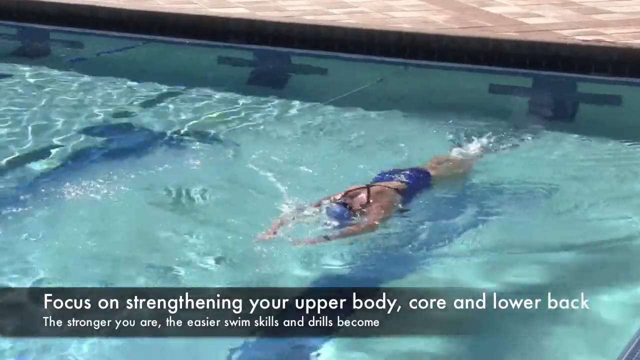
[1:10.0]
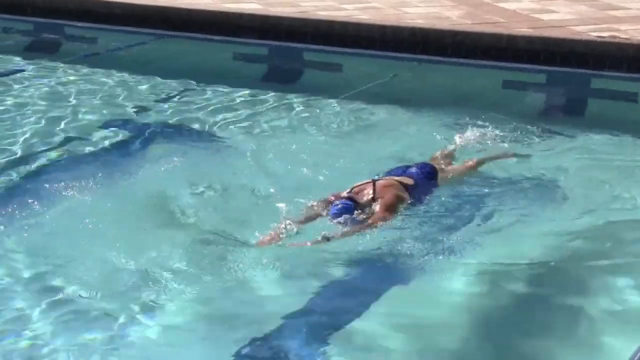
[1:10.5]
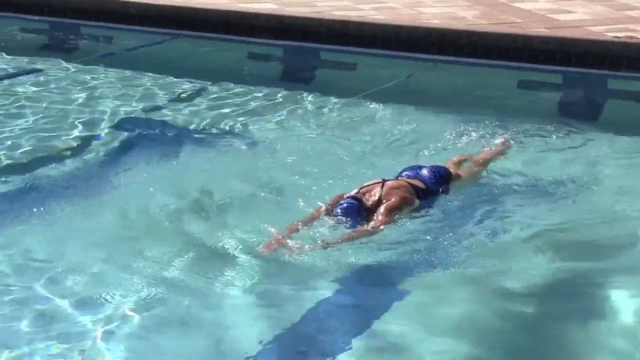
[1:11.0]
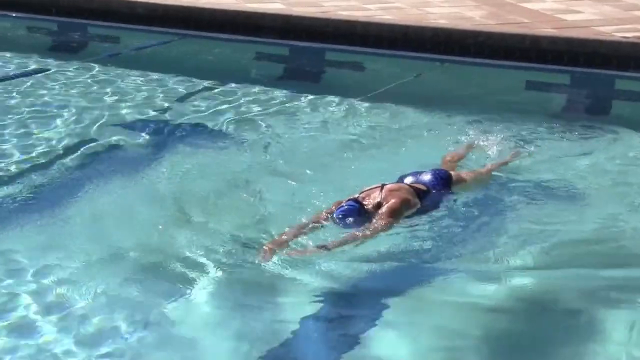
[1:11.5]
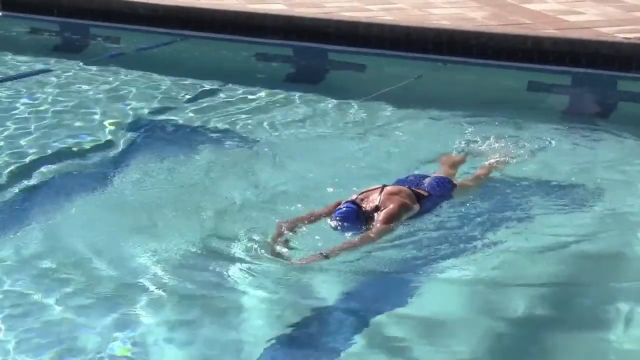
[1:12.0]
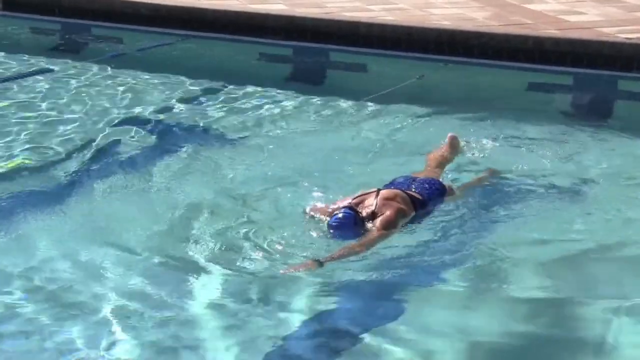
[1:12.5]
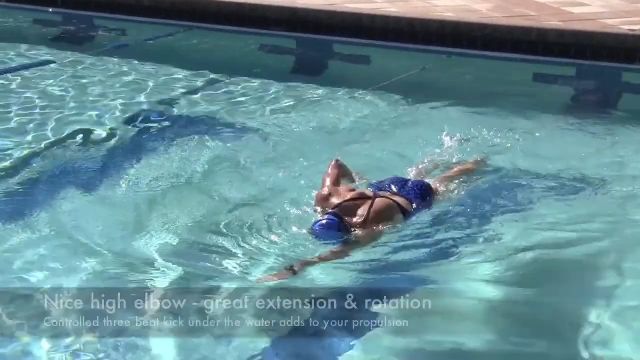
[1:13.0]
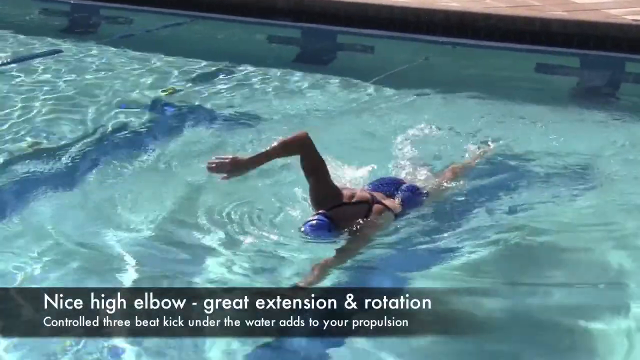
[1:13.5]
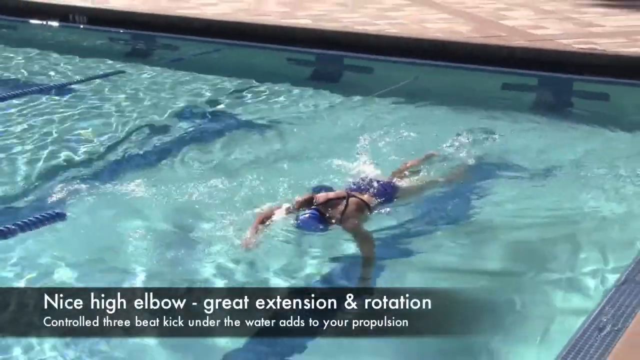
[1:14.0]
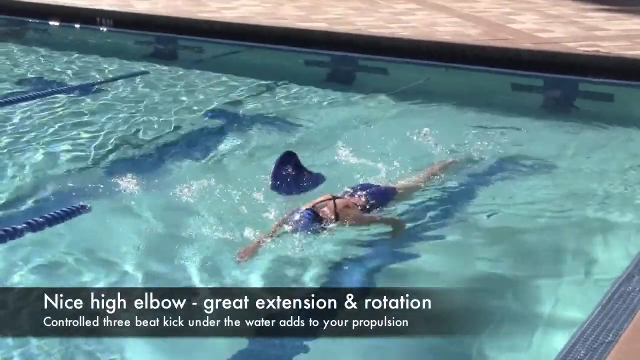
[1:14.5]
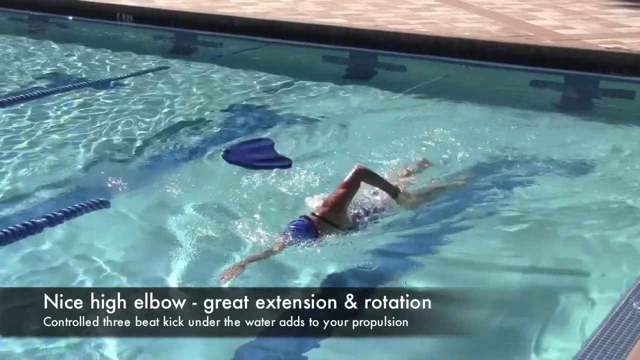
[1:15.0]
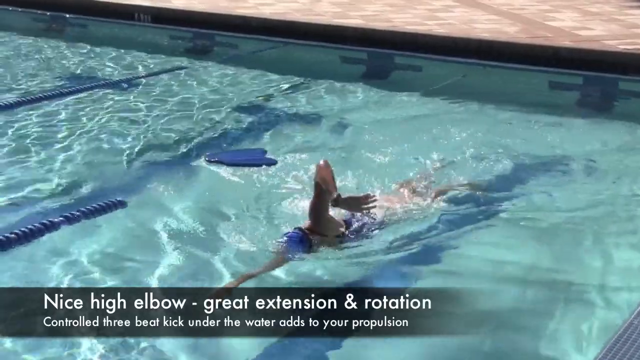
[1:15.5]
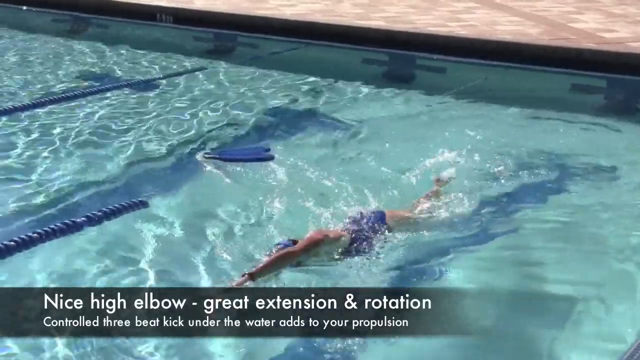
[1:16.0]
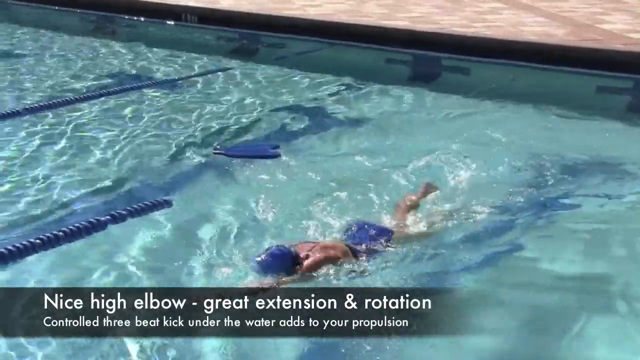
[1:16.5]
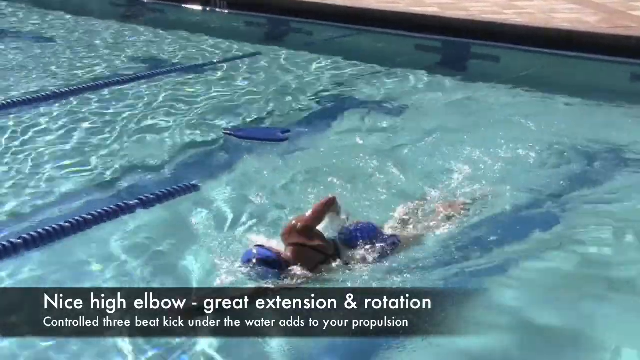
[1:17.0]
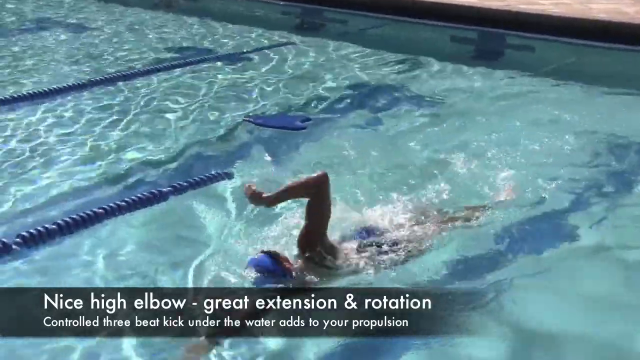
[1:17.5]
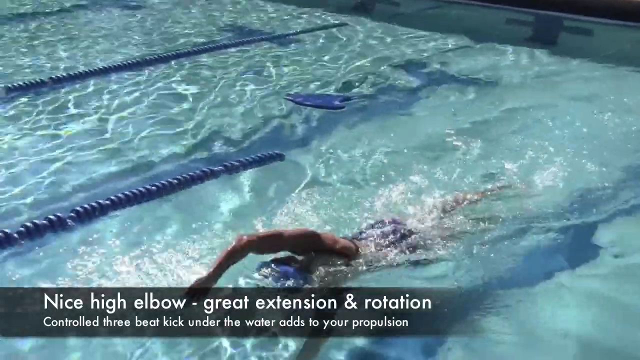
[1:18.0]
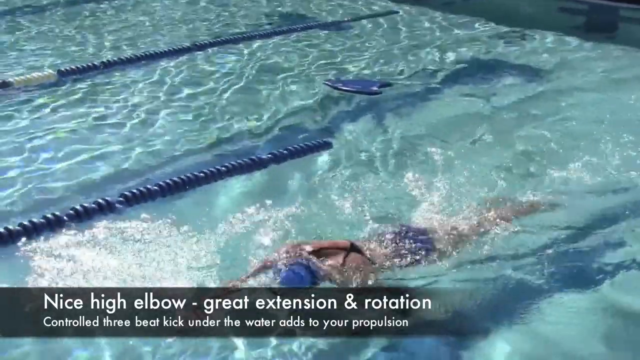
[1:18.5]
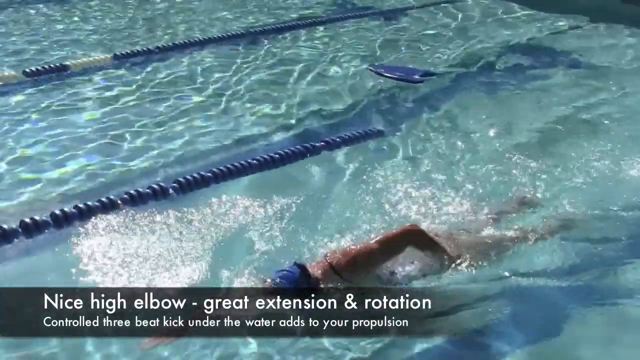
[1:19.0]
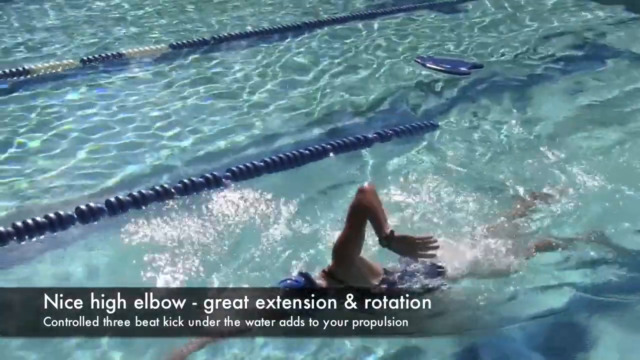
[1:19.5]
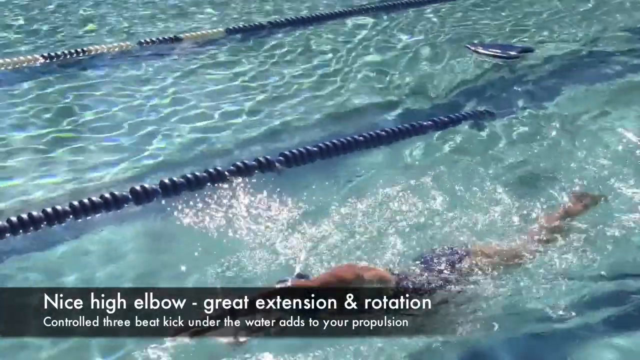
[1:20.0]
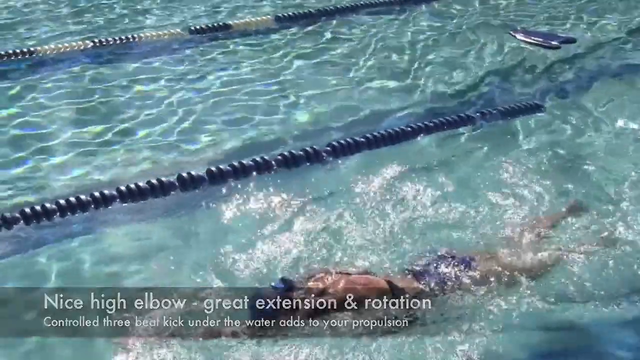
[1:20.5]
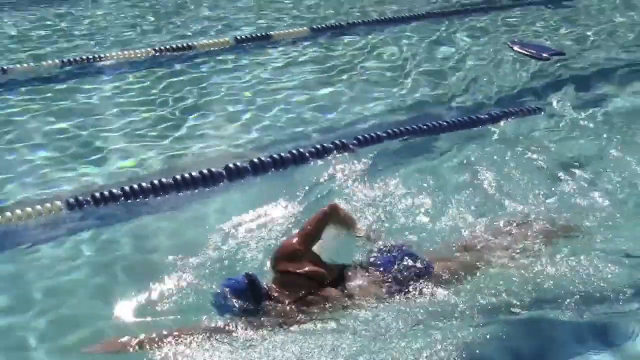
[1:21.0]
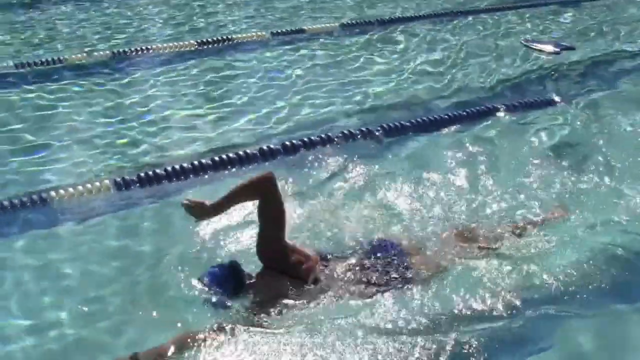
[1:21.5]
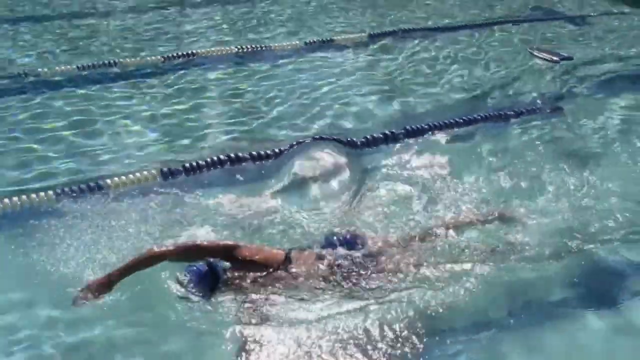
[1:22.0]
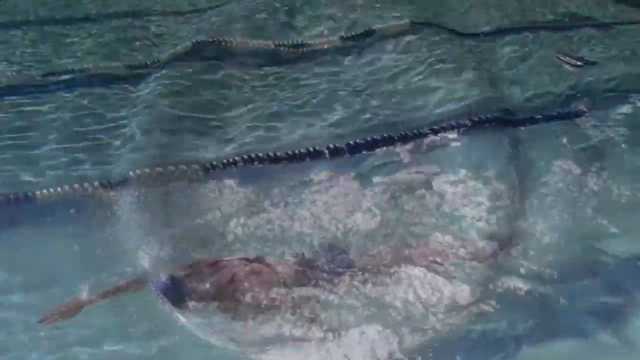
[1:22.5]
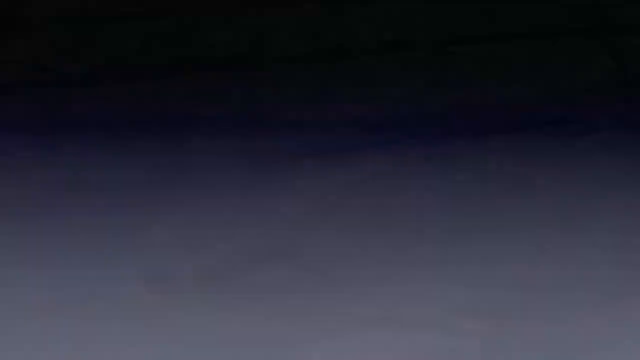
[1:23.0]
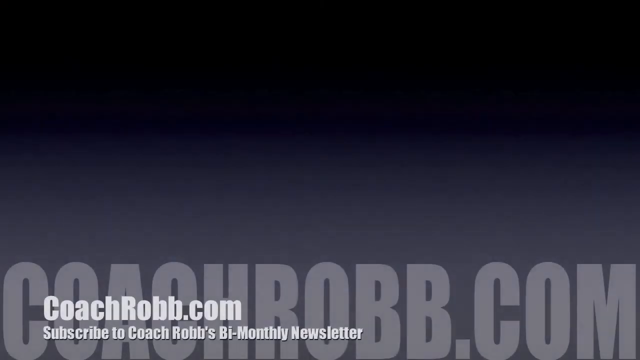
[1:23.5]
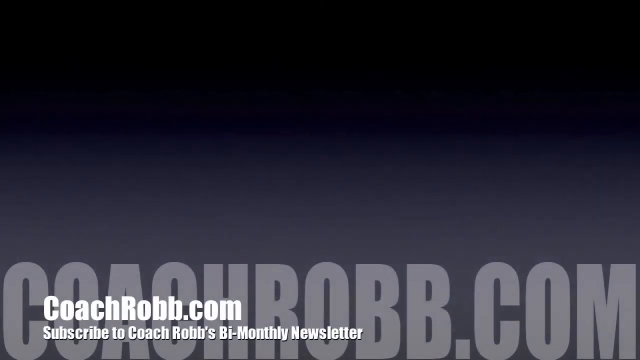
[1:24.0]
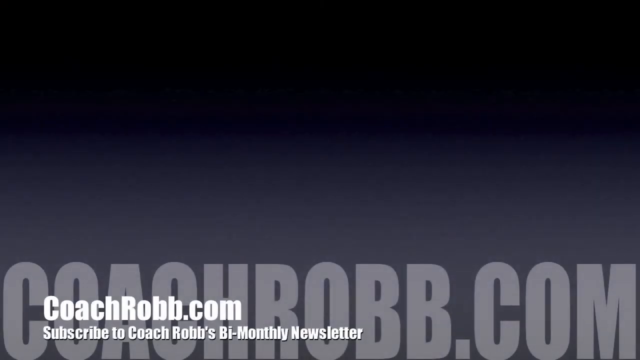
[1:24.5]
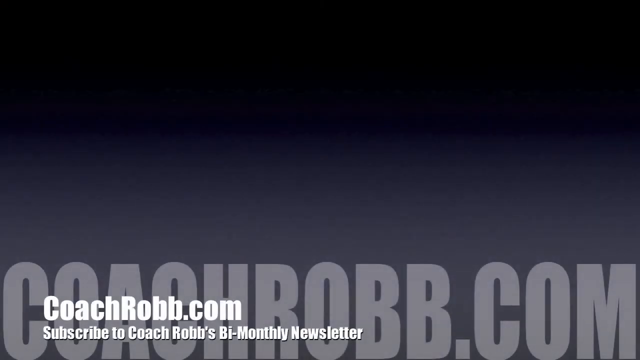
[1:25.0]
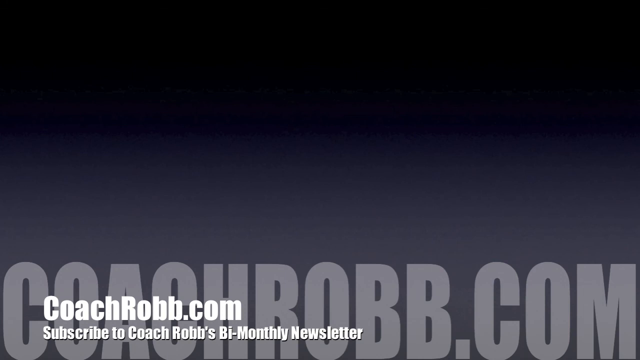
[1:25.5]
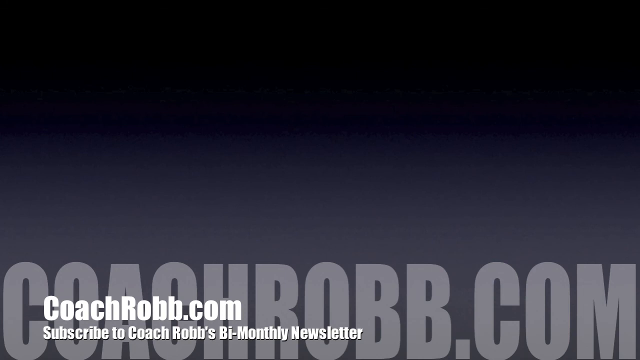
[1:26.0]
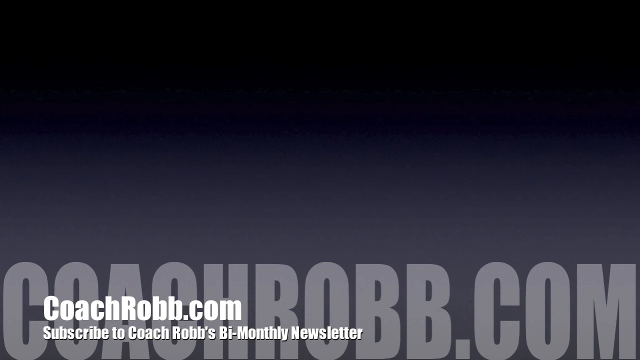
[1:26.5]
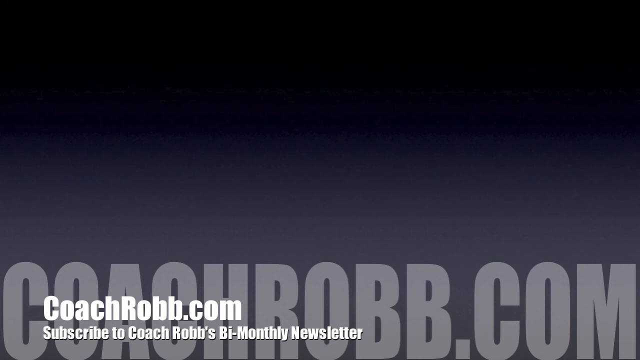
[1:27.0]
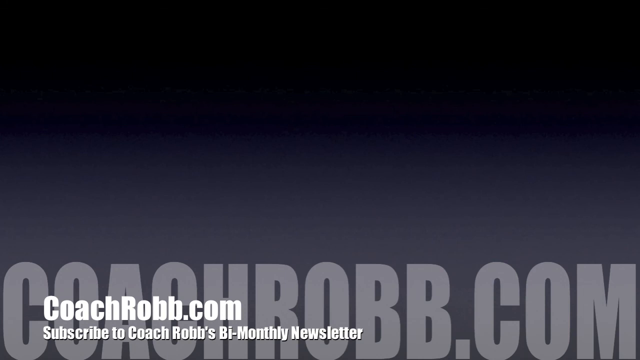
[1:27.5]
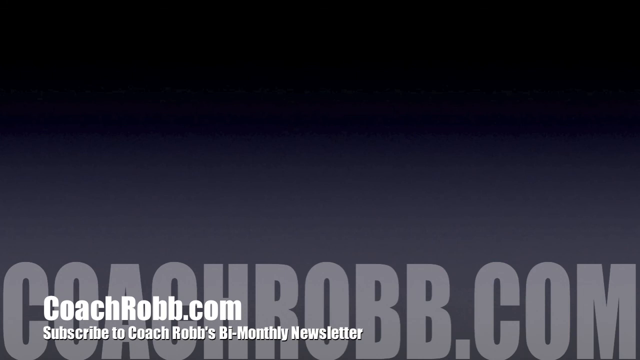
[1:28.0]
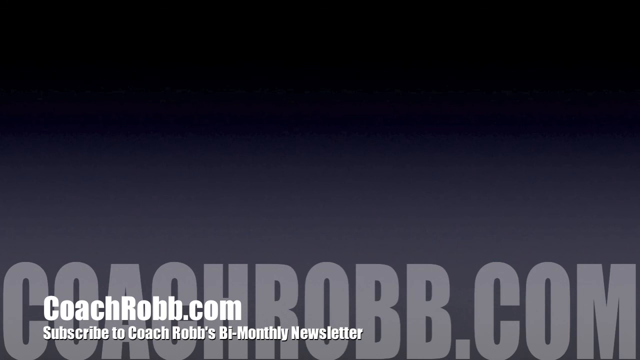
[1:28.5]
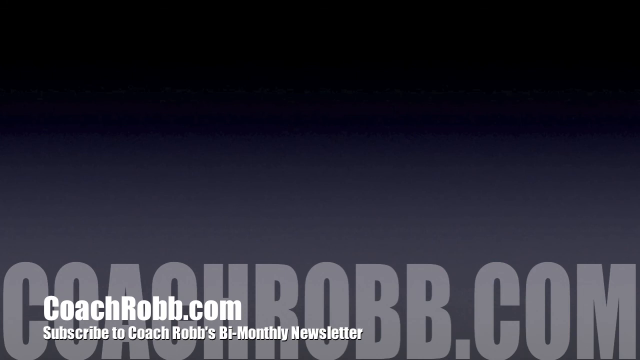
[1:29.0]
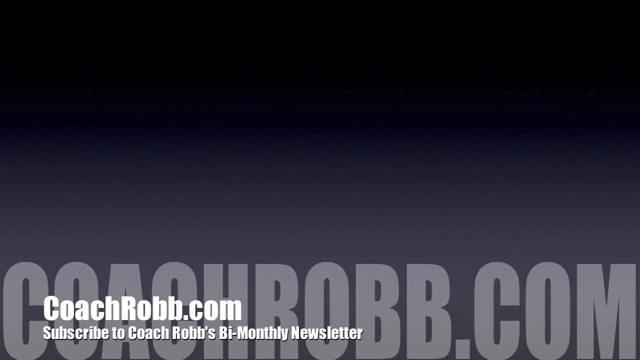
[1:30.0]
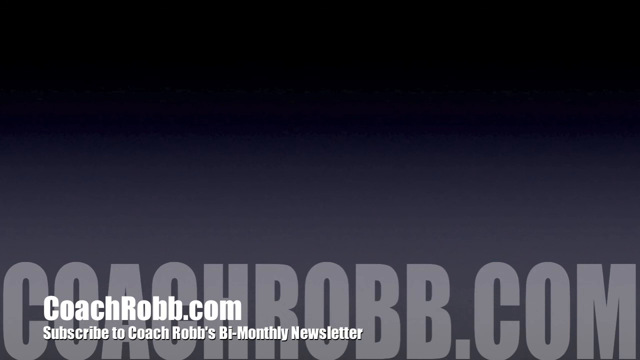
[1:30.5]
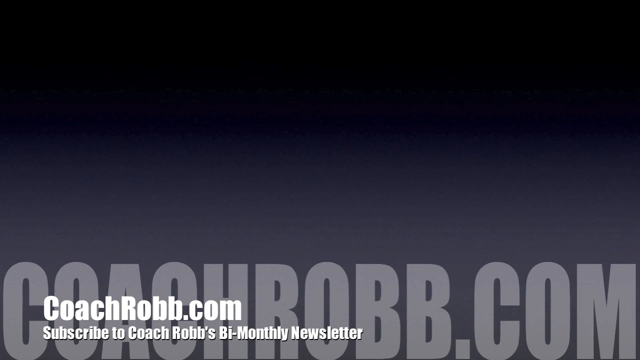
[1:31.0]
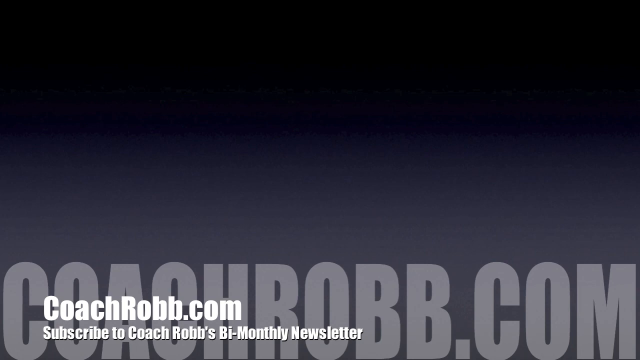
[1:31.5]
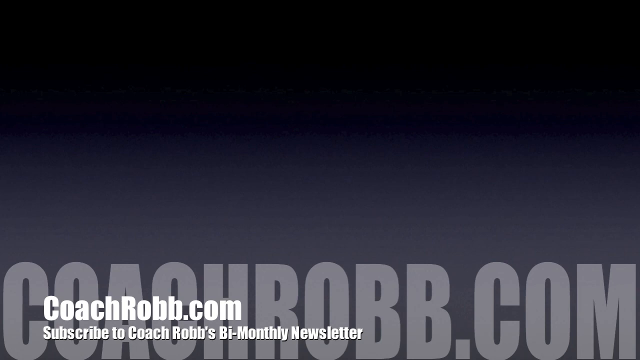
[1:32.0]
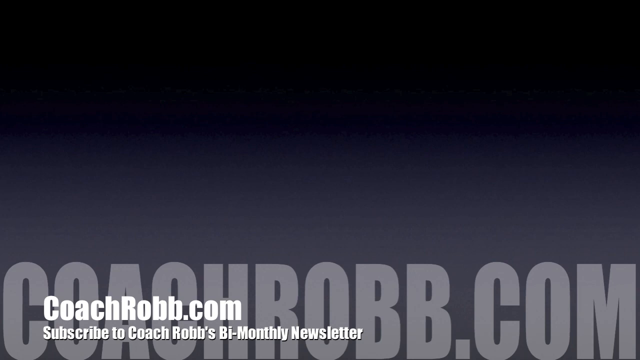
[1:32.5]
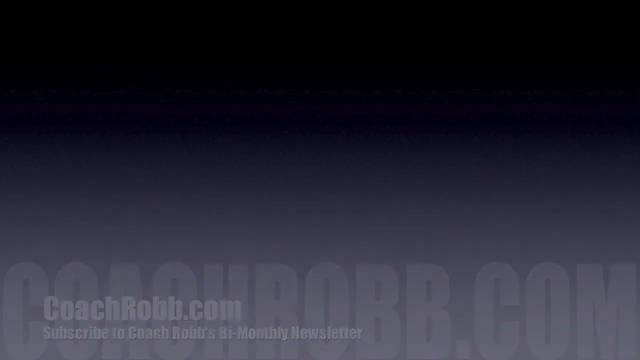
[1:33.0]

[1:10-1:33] Text reads "focus on strengthening your upper body, core and the lower back" and "the stronger you are, the easier swim skills and drills becomes". The video then shows coachlib.com and text reading "subscribe to CoachLibs".